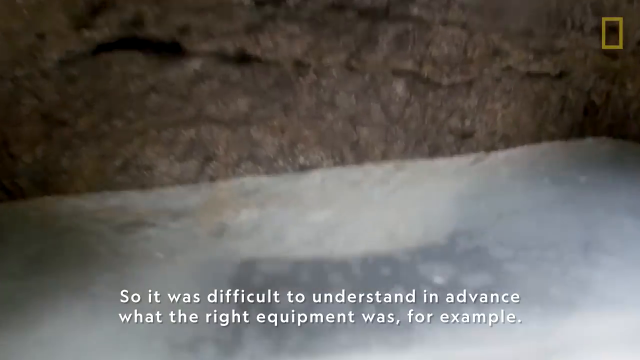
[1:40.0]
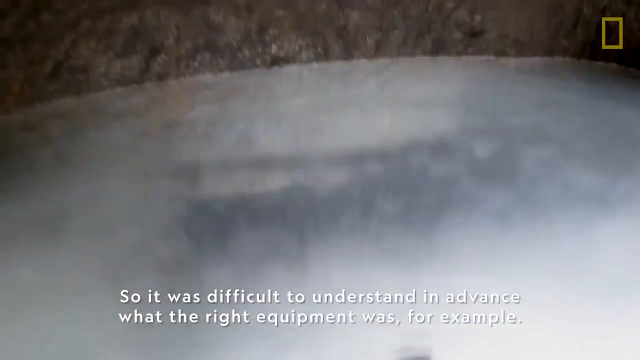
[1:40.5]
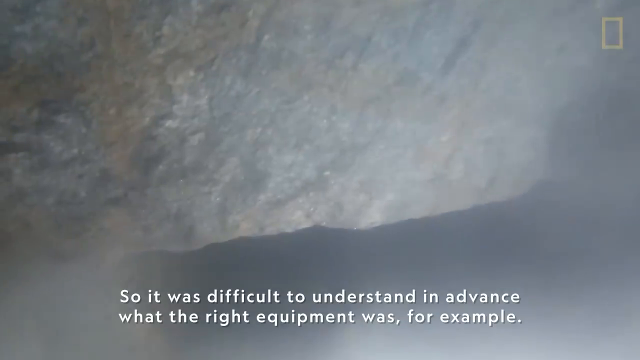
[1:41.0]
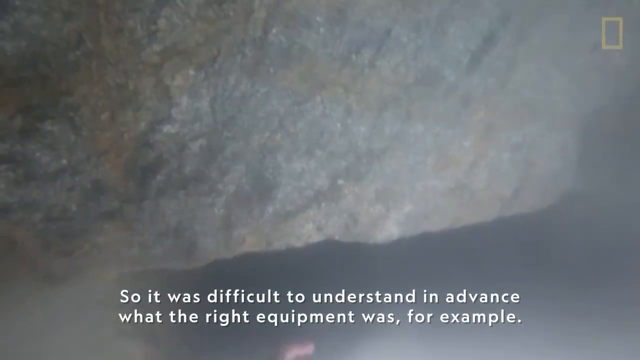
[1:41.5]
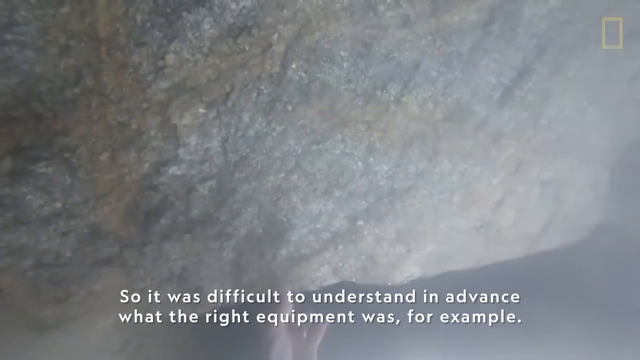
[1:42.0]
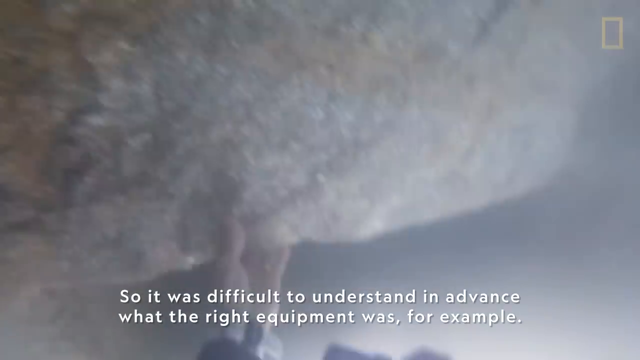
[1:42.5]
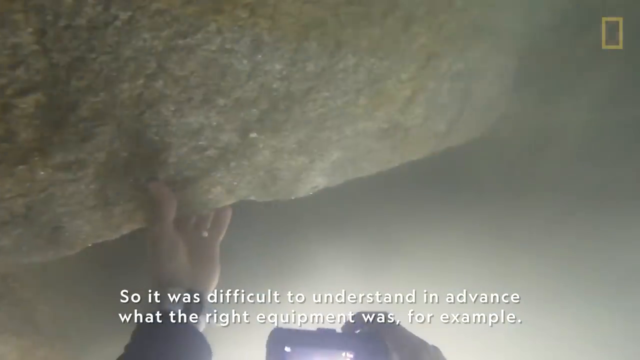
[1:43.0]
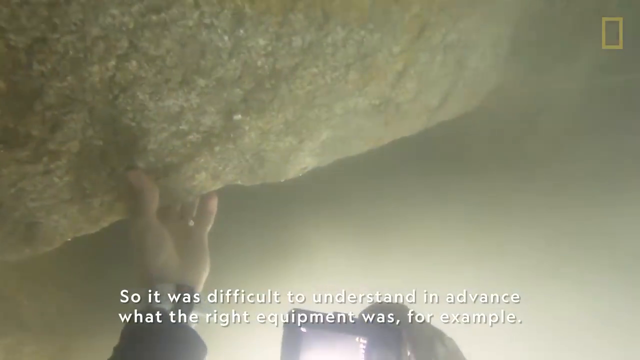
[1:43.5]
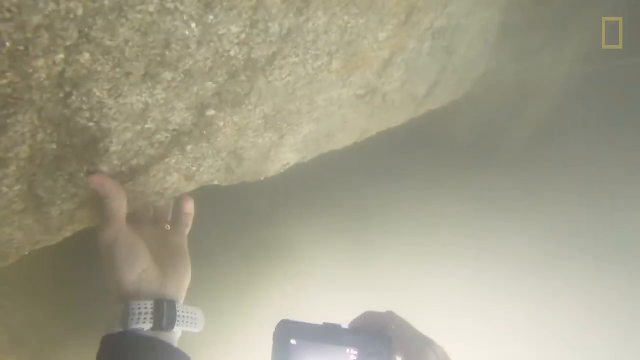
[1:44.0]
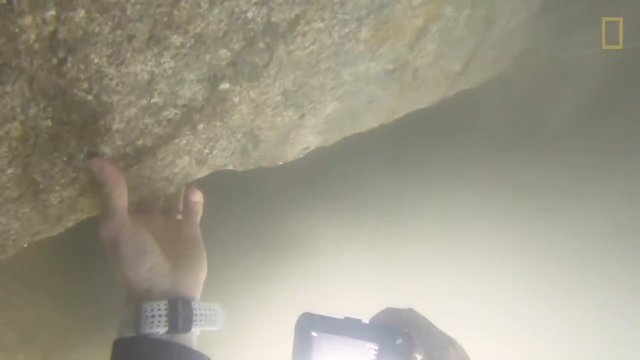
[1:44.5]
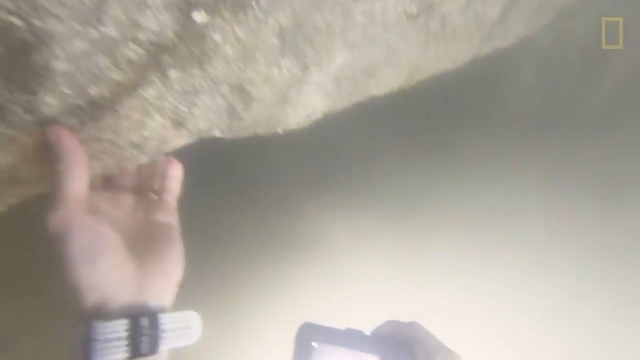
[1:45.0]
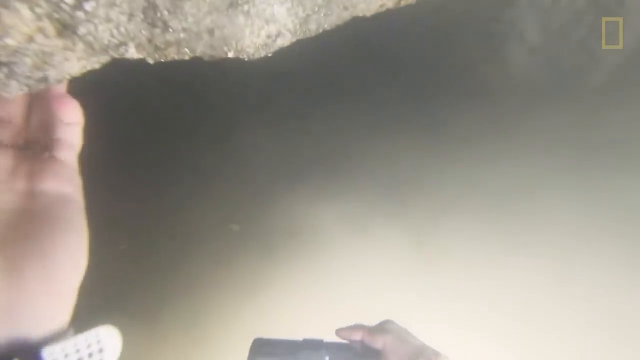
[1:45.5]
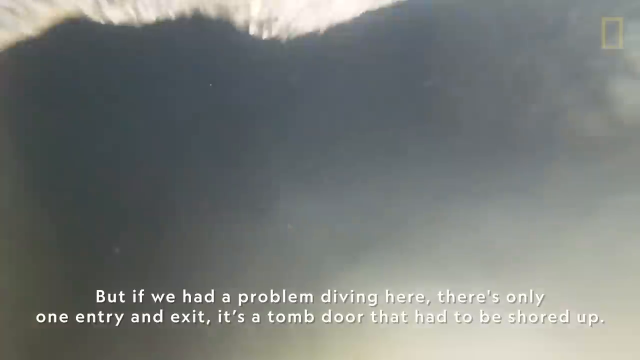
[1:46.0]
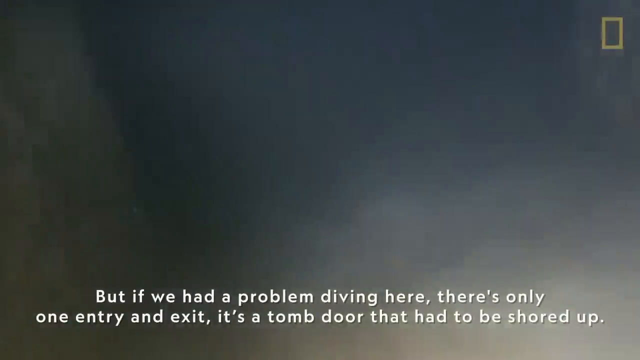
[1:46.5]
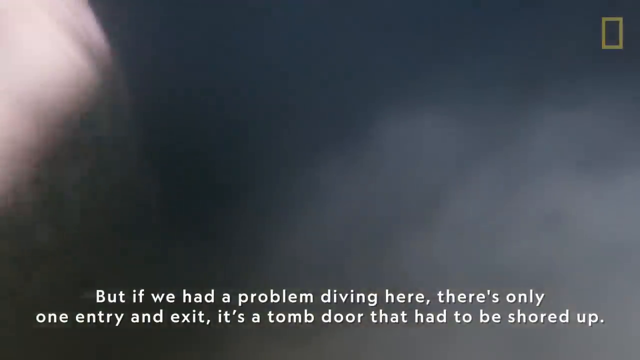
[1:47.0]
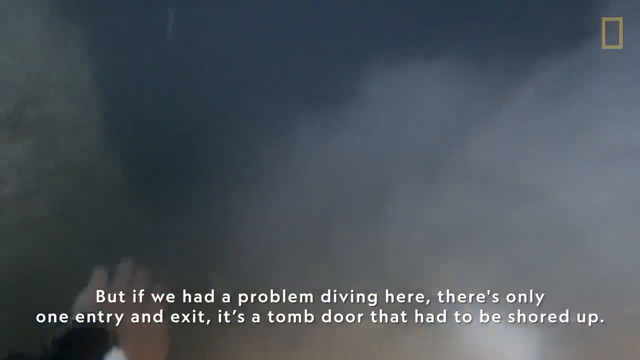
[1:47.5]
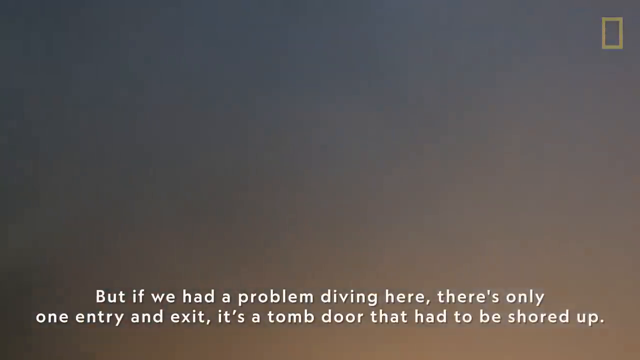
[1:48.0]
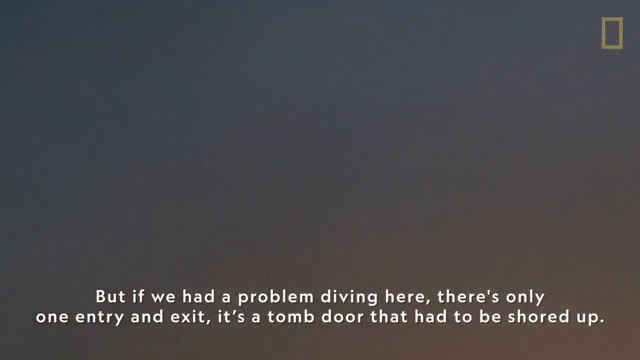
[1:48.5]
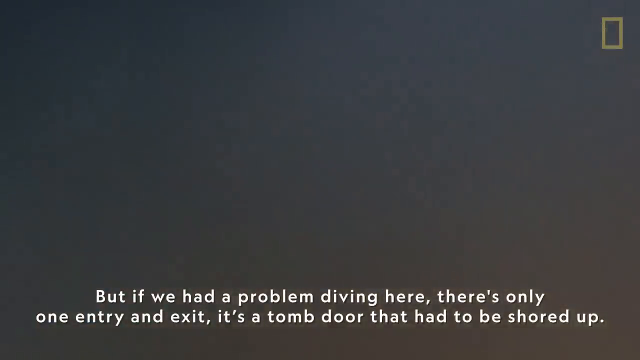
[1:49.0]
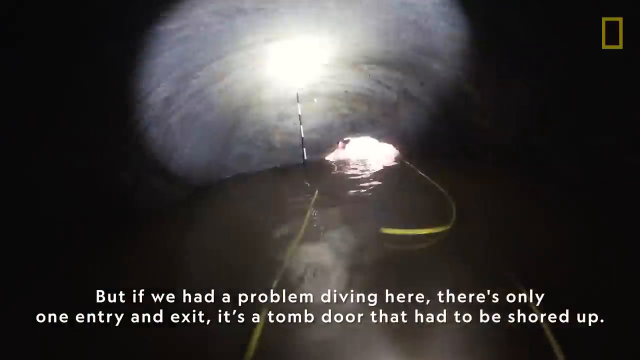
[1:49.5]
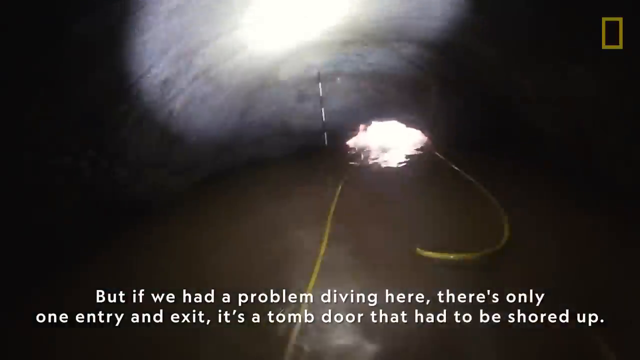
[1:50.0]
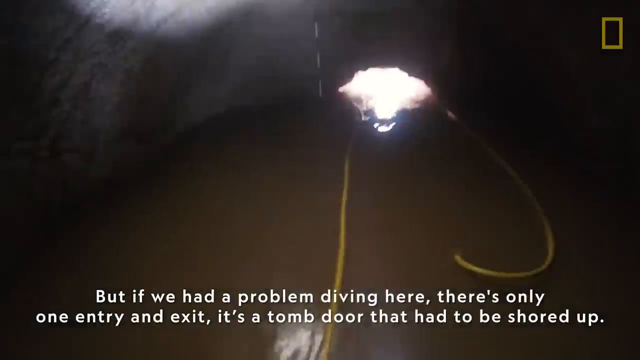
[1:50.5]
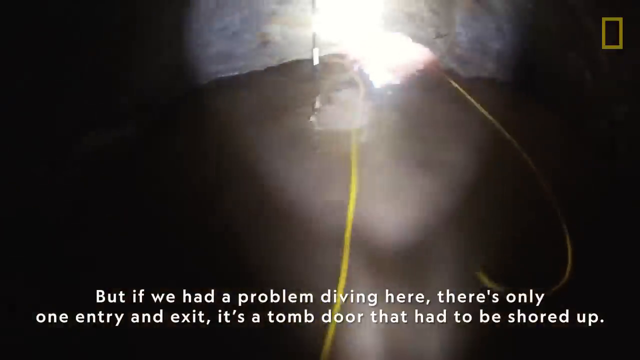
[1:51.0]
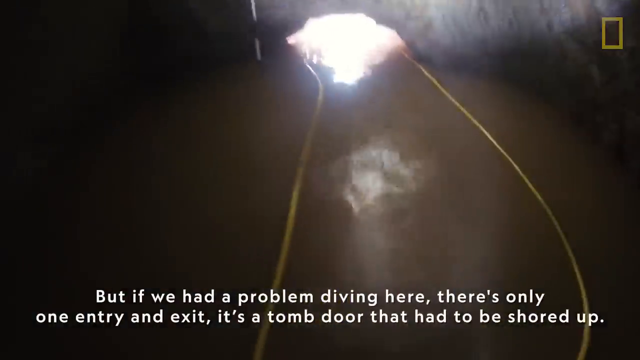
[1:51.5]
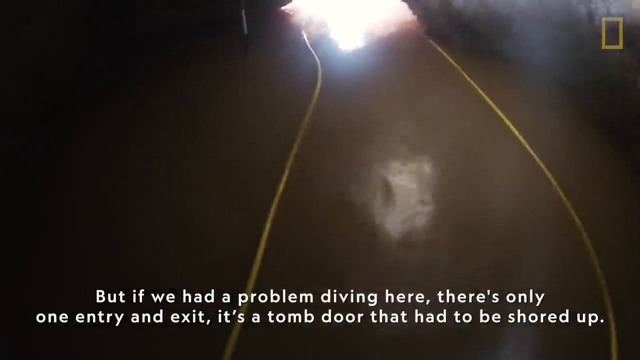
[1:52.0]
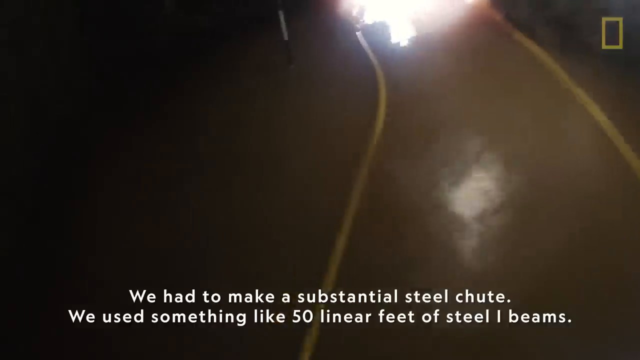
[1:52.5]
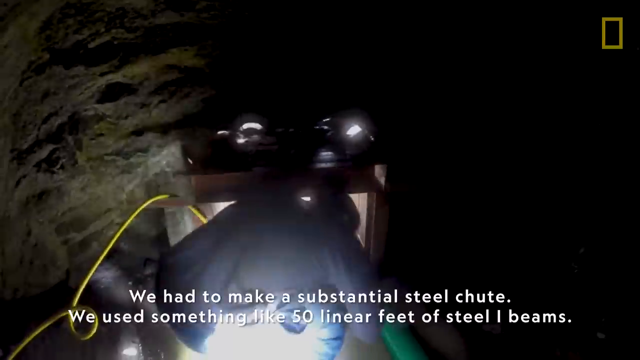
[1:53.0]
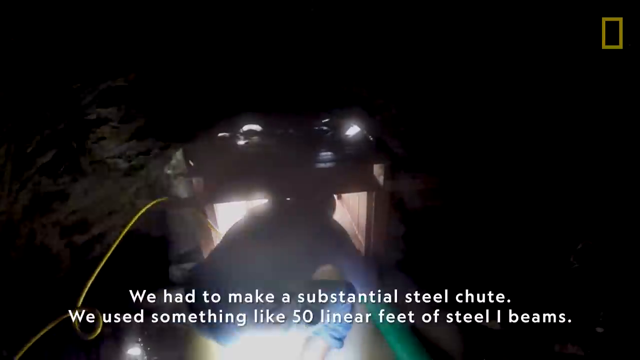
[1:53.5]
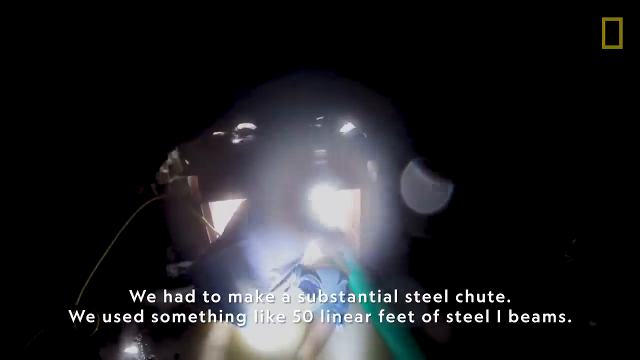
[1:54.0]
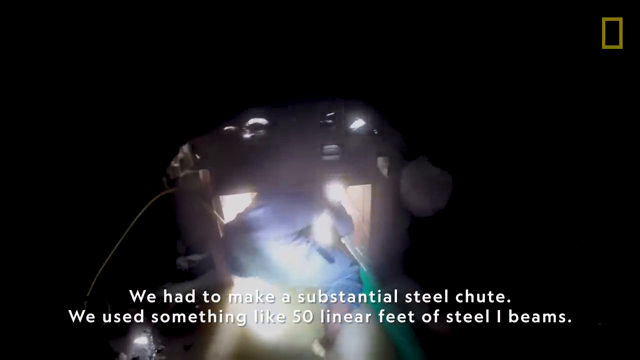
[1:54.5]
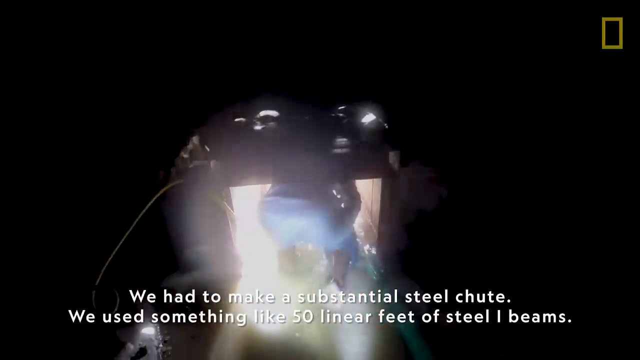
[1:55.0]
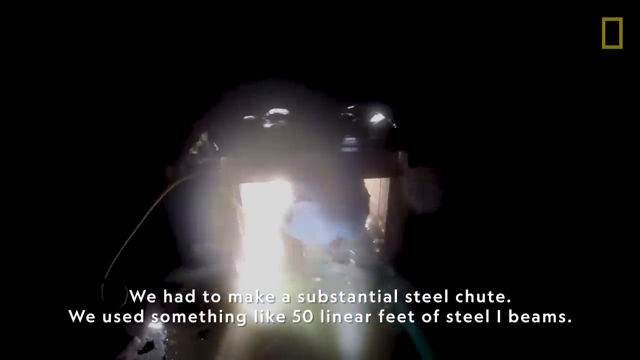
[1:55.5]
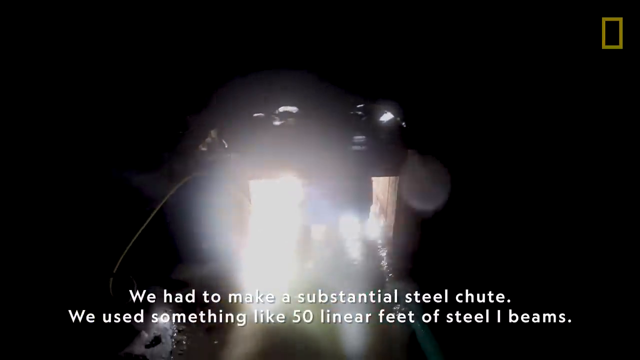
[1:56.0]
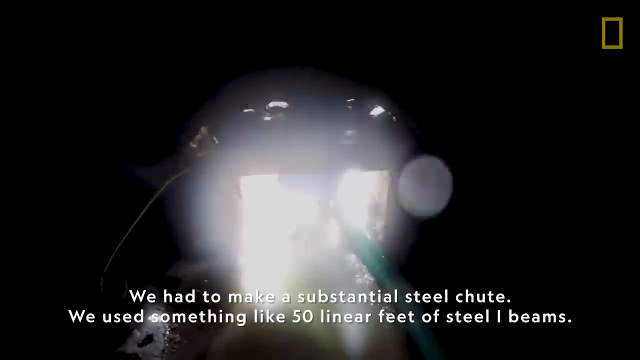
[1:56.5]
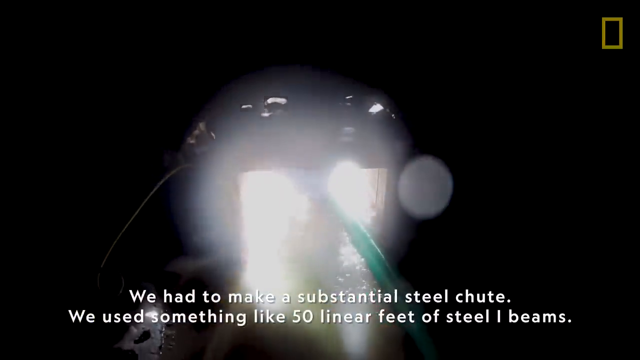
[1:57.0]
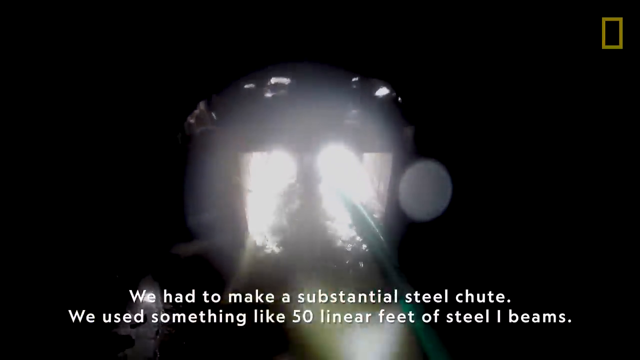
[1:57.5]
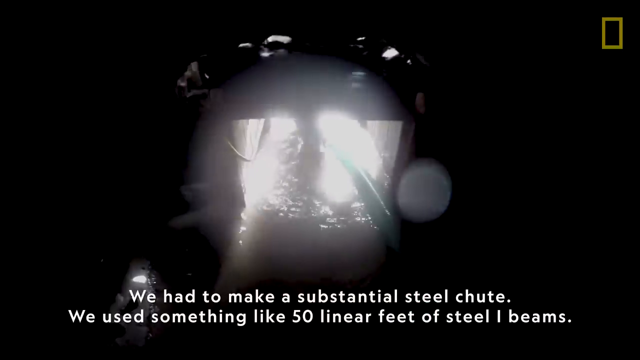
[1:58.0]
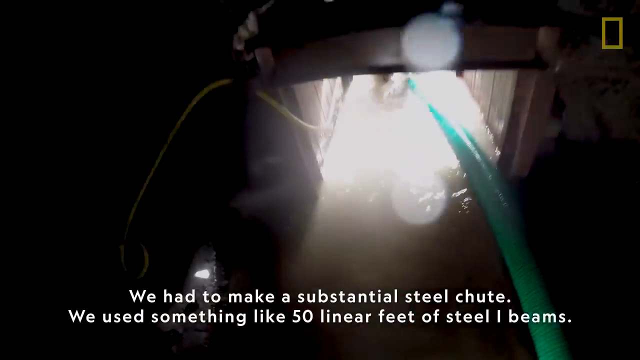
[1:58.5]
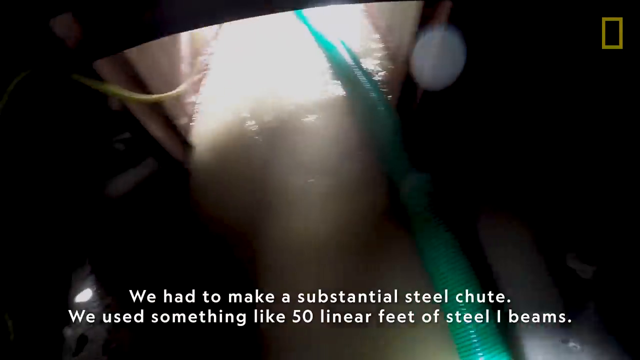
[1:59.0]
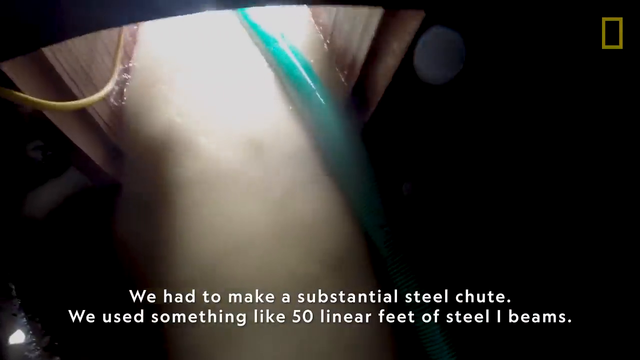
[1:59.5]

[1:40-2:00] There is only one entry and exit point to the tombs. A steel chute about 50 linear feet long has been made to get down there, and the tomb door is shored open. Big hoses are in place sucking the water out from around the tomb entry, but it is still damp, with some water still there.